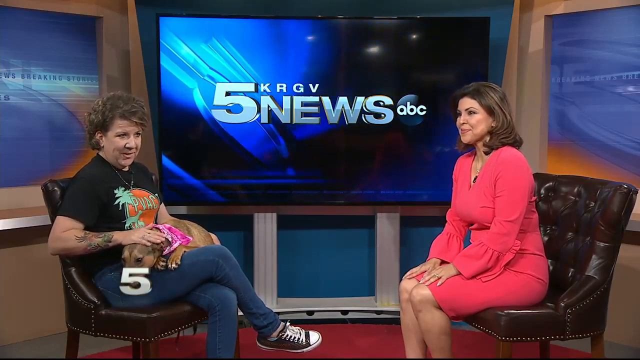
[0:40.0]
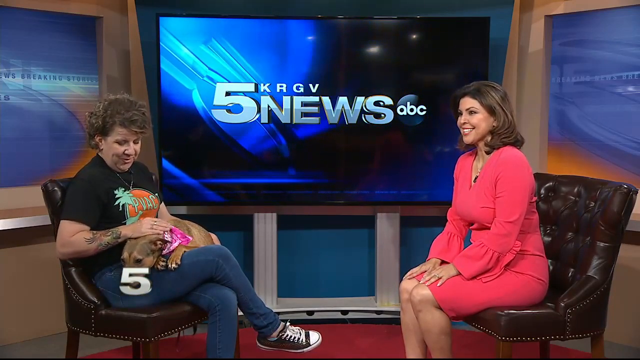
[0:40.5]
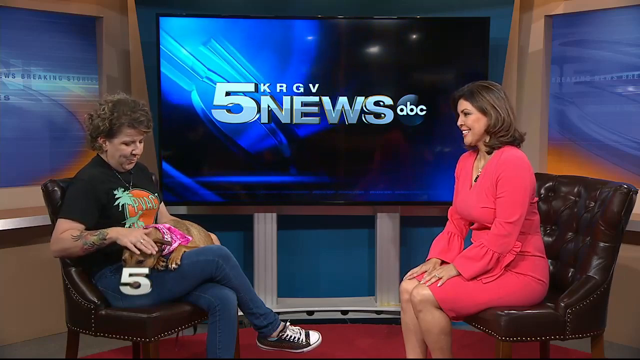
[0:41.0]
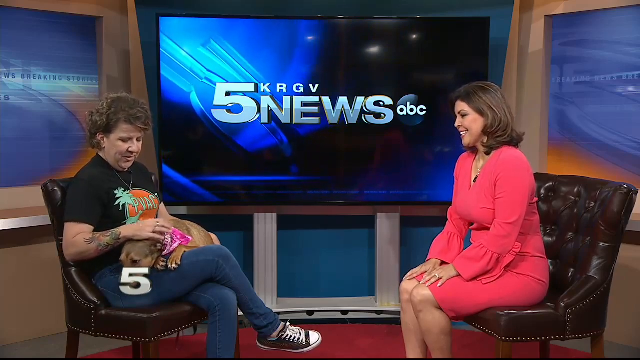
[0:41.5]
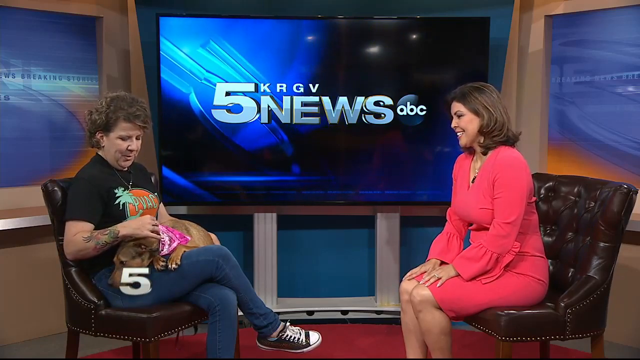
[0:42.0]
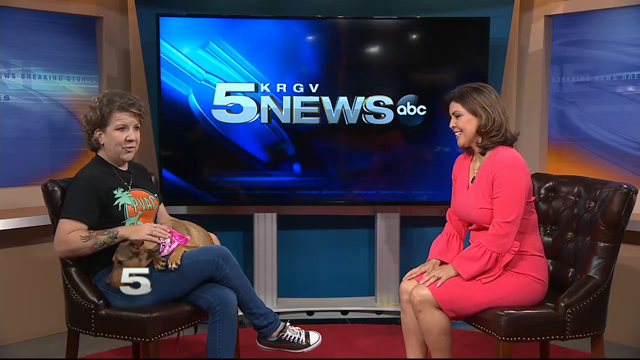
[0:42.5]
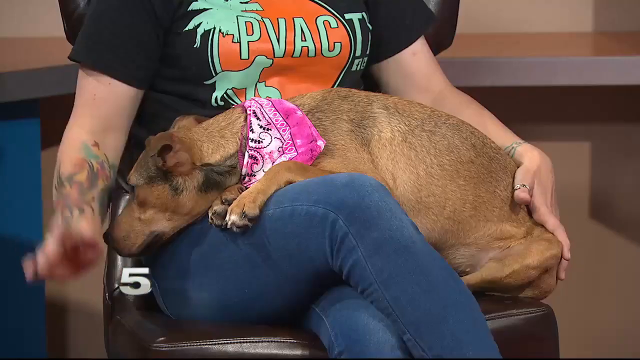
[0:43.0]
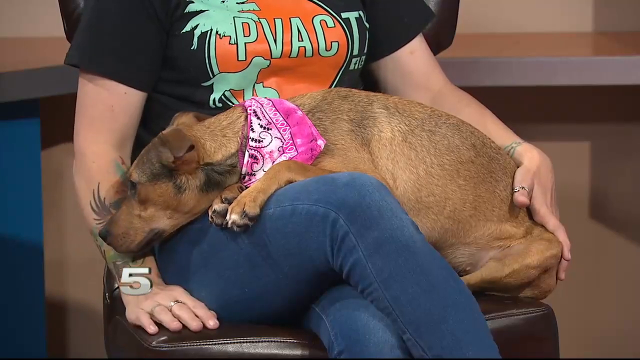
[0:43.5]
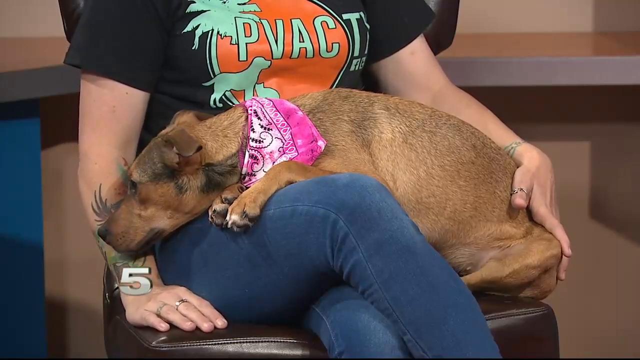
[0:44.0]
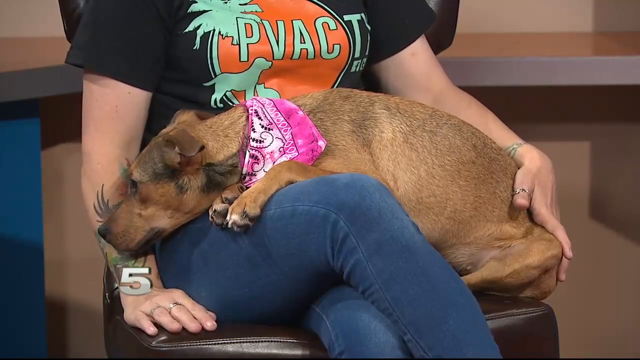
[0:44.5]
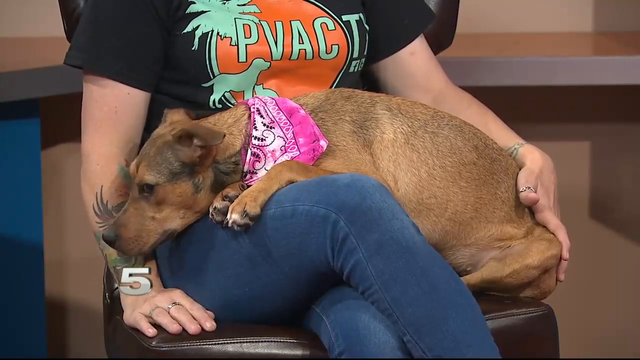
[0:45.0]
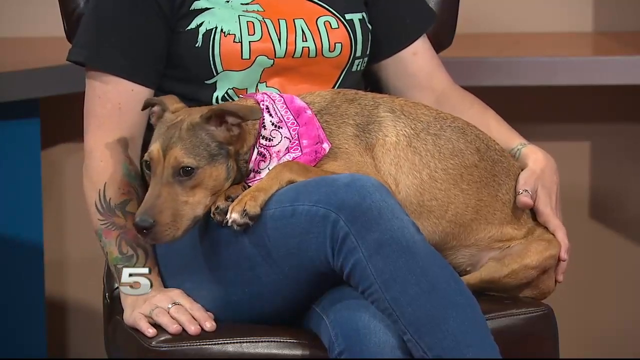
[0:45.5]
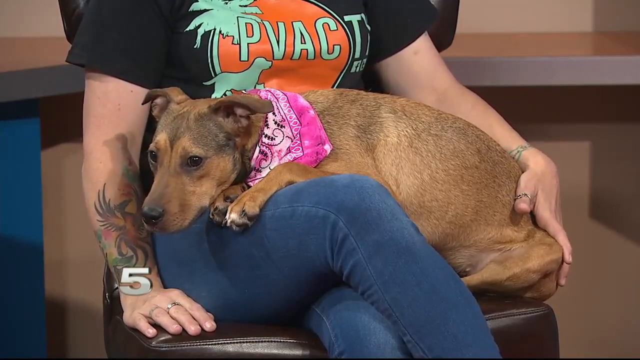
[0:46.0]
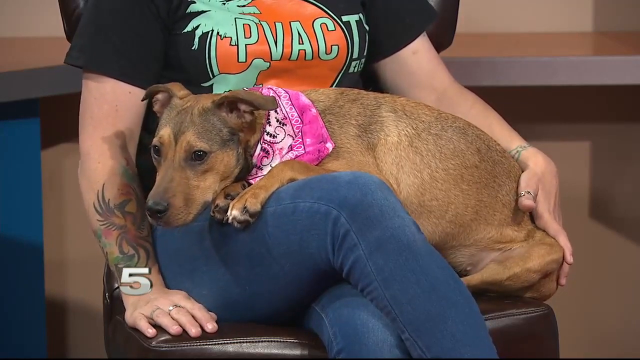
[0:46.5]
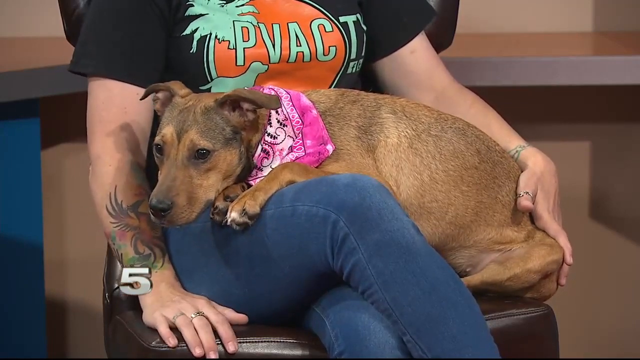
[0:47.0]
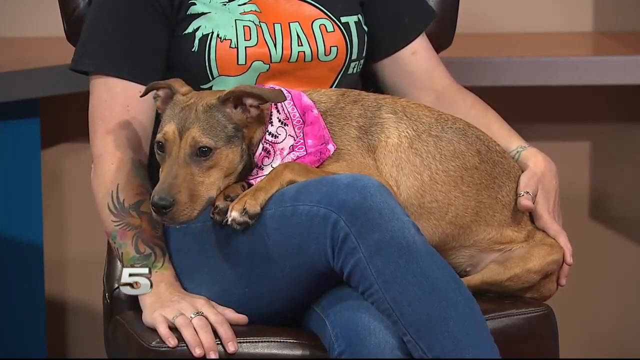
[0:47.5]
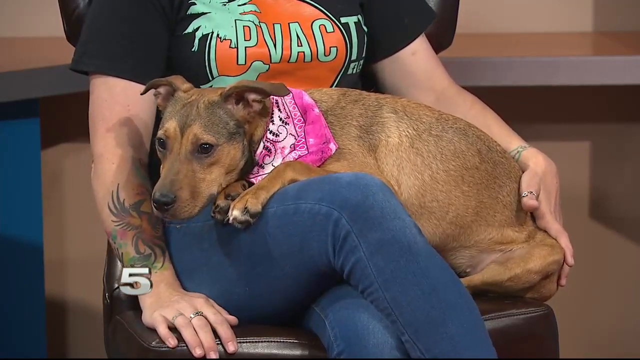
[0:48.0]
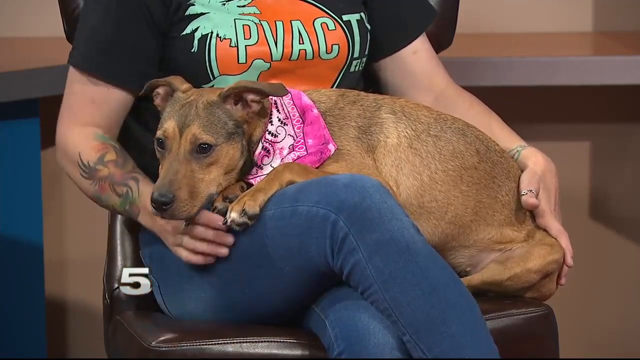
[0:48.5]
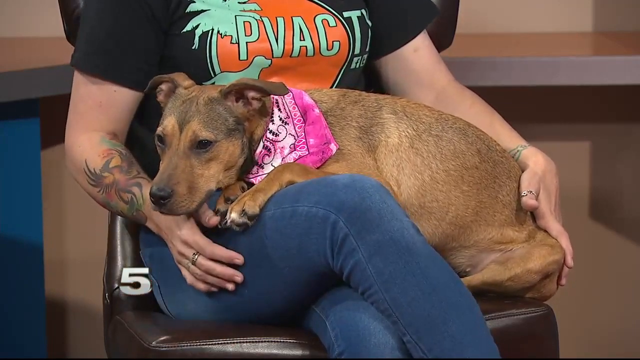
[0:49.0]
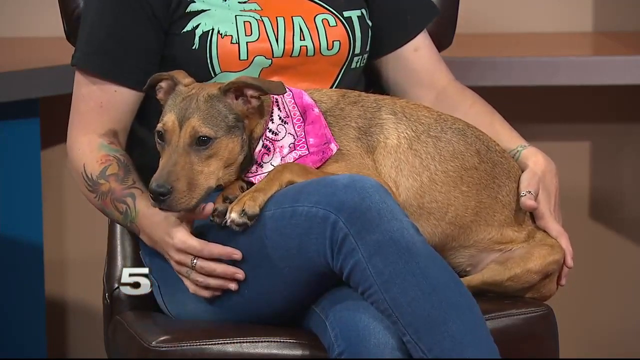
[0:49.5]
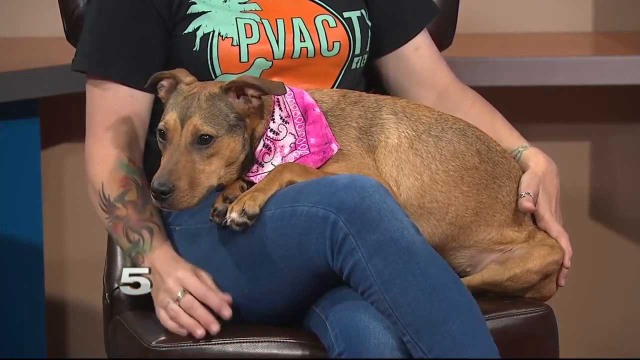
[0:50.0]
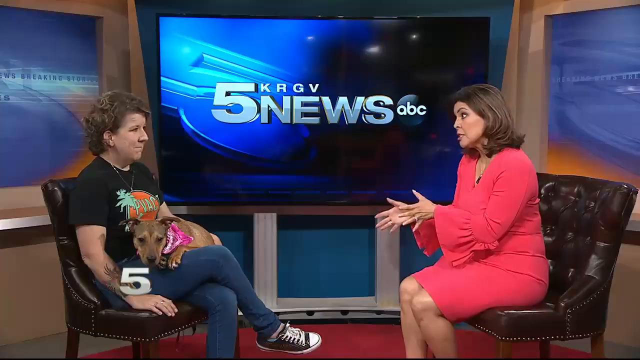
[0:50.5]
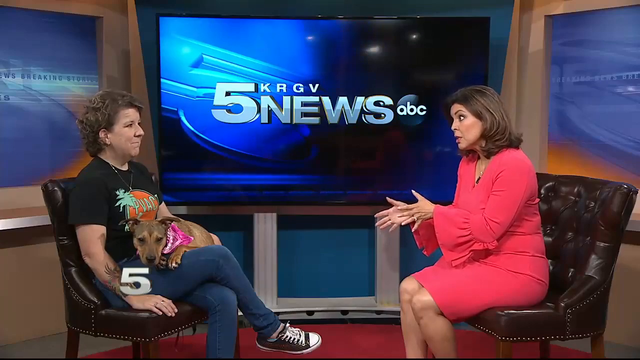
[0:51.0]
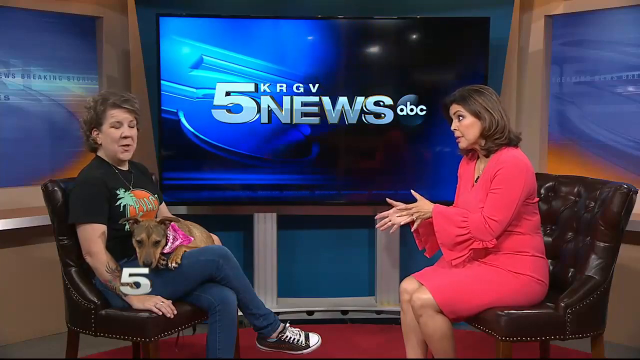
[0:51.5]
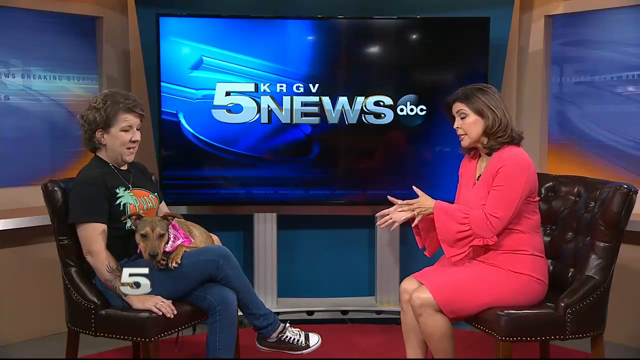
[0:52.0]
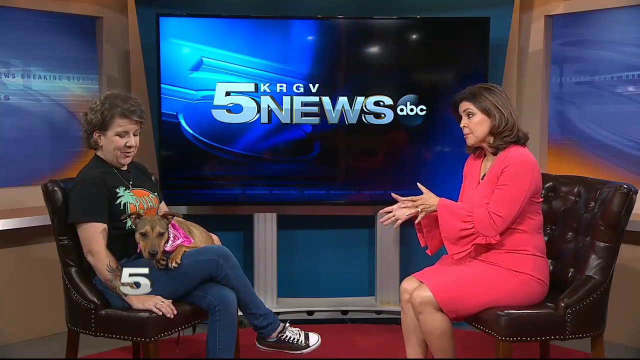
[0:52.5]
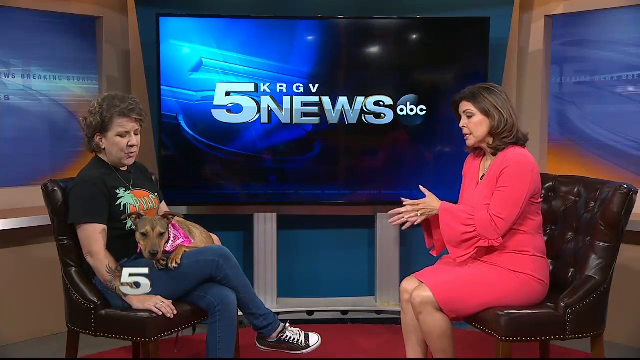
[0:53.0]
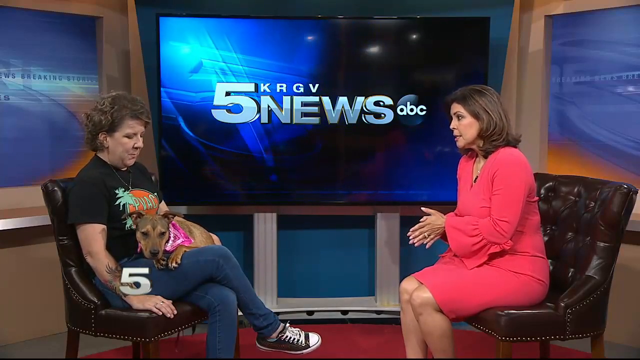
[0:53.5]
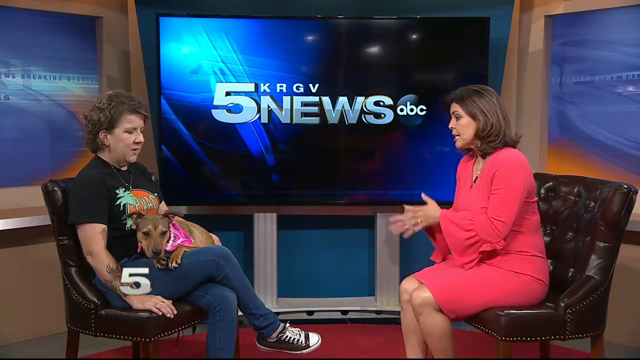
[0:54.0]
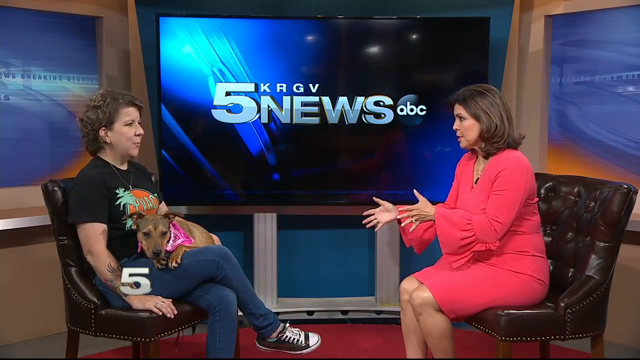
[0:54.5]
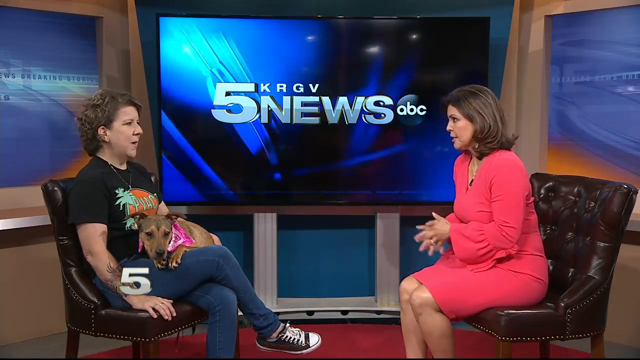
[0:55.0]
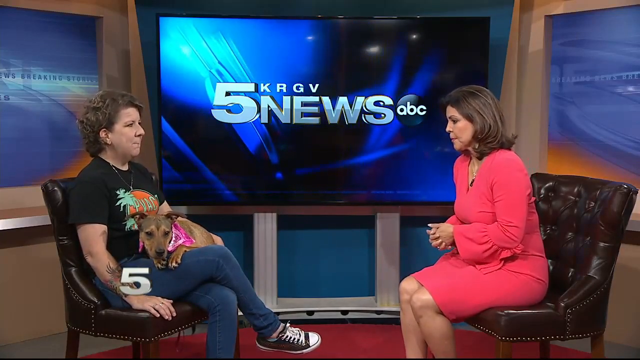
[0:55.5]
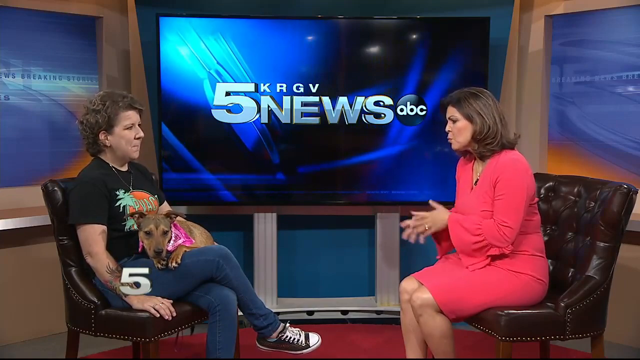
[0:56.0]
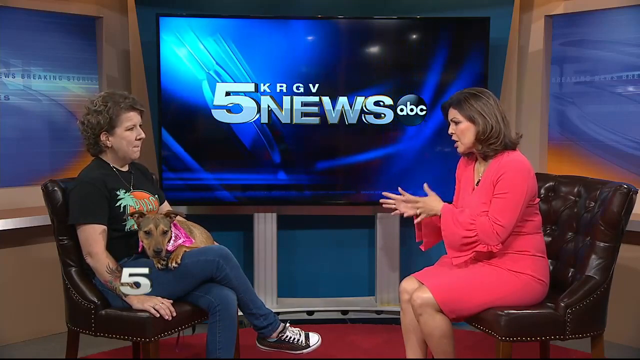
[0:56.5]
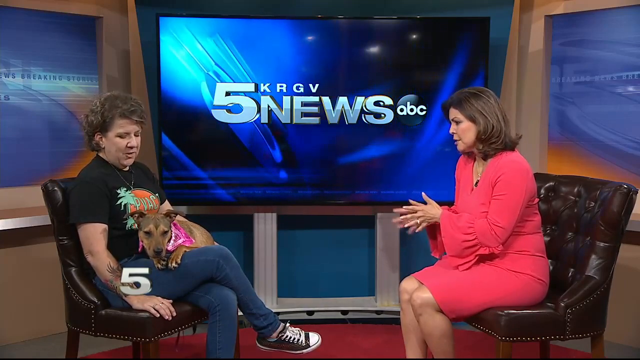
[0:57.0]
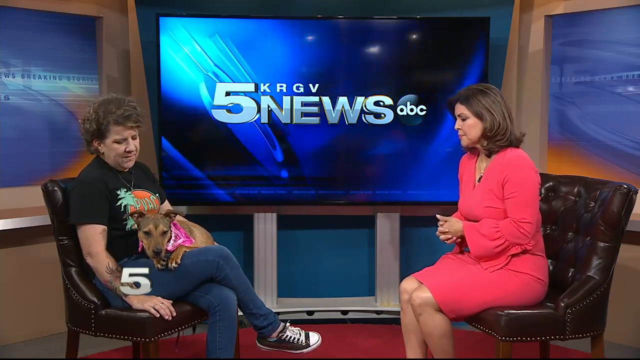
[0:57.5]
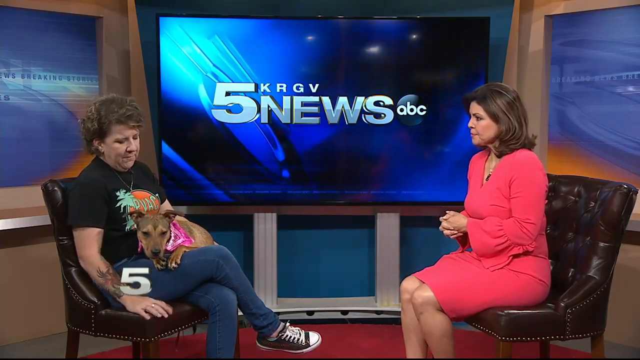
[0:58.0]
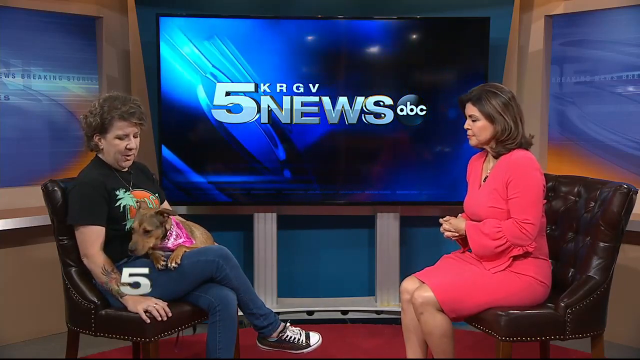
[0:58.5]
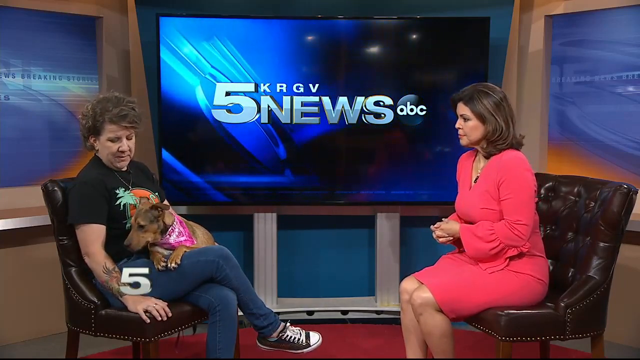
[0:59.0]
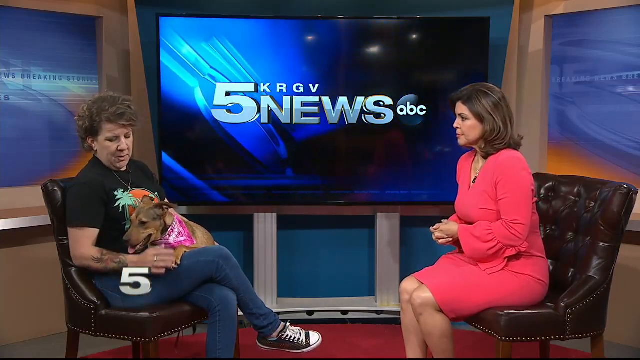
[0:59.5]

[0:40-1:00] The dog's head is down on the owner's thigh while the owner pets its head with her right hand and places her left hand near its tail to support it. The owner slowly caresses the dog's paws with her right hand. The dog opens its mouth, and the owner pets its neck. Meanwhile, the anchor gestures with her right and left hands in the same way as she talks, closes her hands together, moves them back and forth, and folds them together with interlocking fingers.